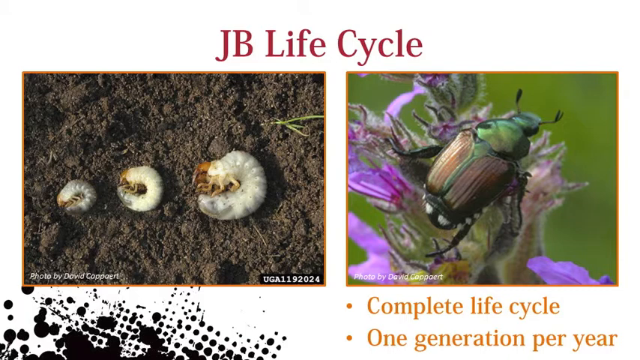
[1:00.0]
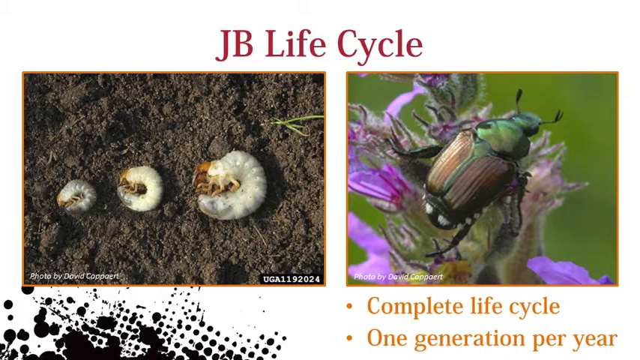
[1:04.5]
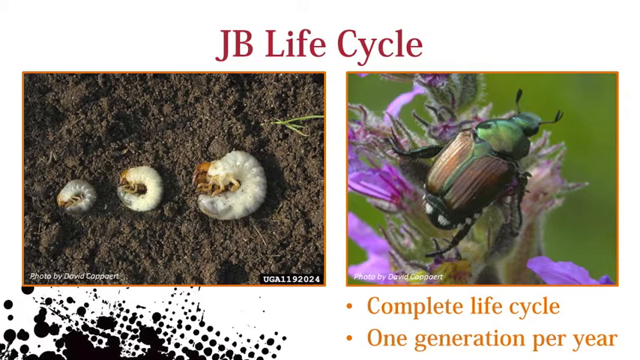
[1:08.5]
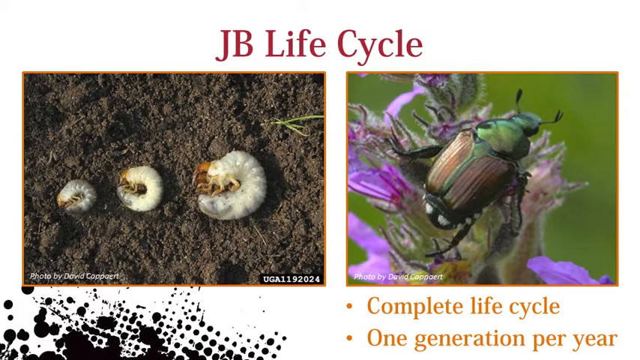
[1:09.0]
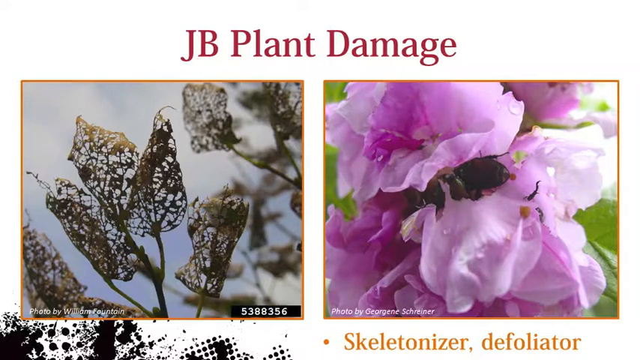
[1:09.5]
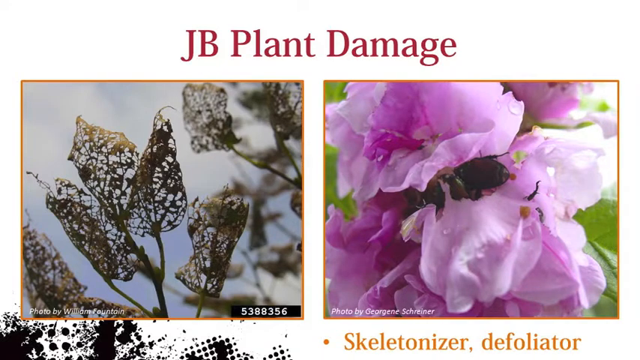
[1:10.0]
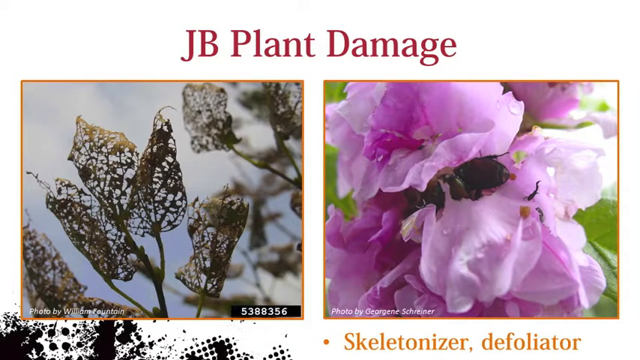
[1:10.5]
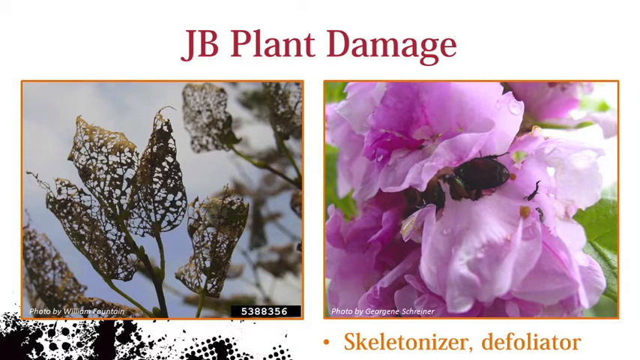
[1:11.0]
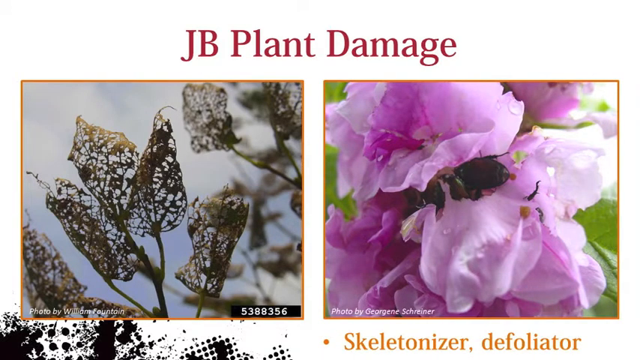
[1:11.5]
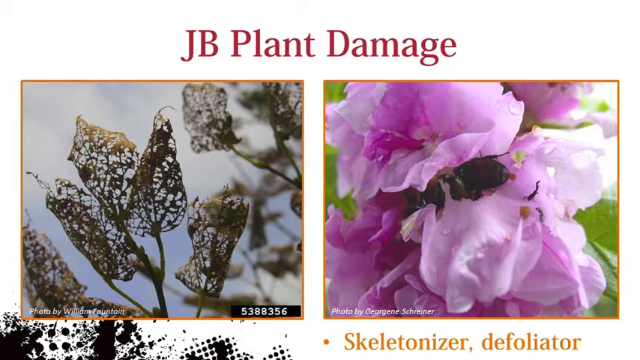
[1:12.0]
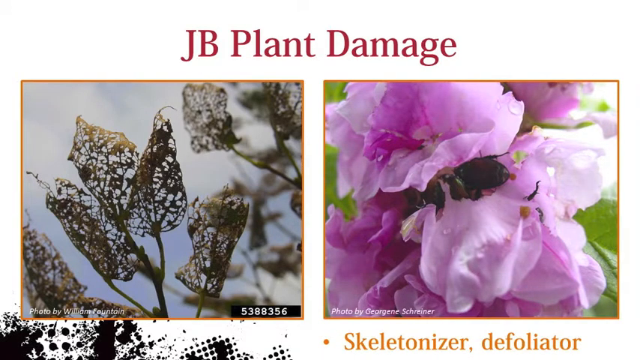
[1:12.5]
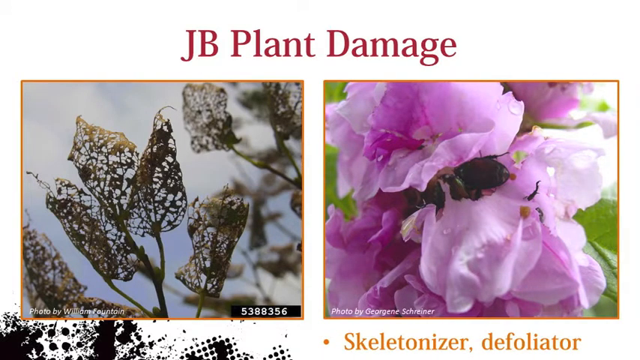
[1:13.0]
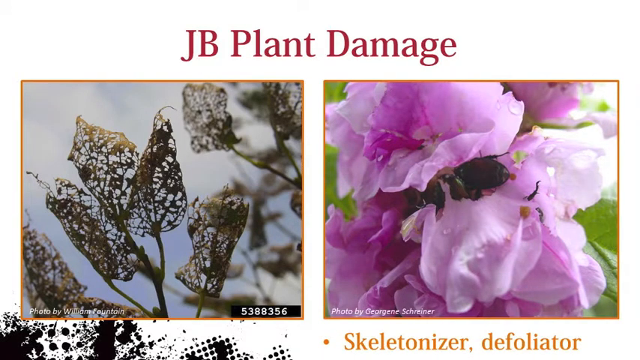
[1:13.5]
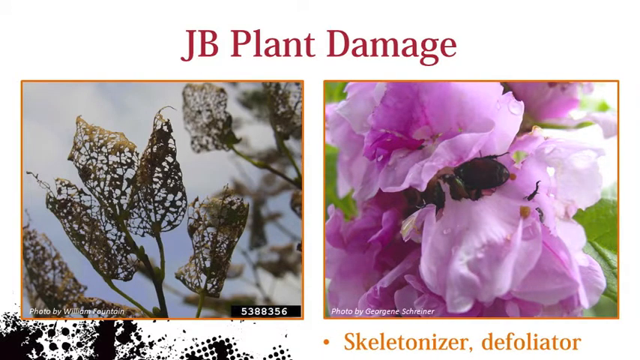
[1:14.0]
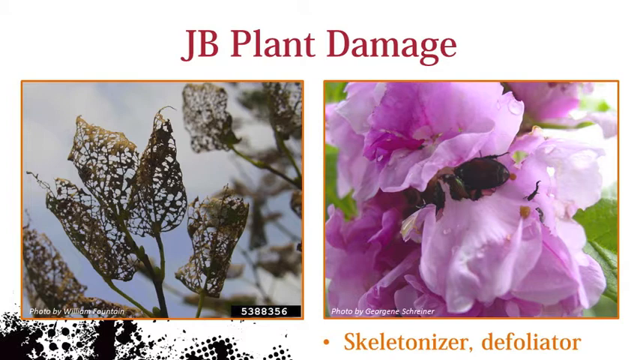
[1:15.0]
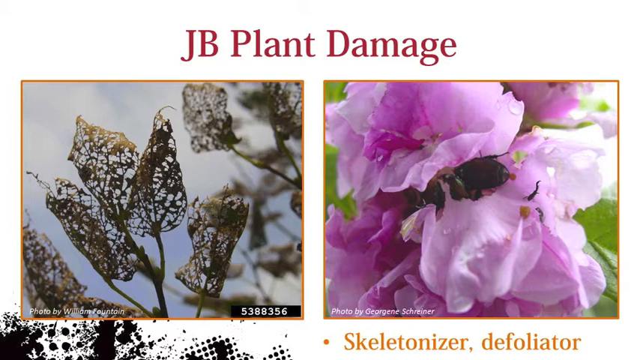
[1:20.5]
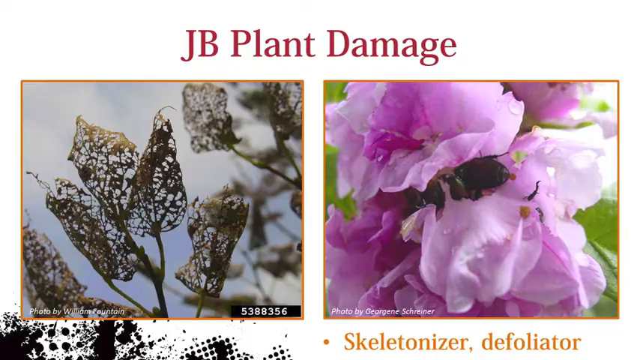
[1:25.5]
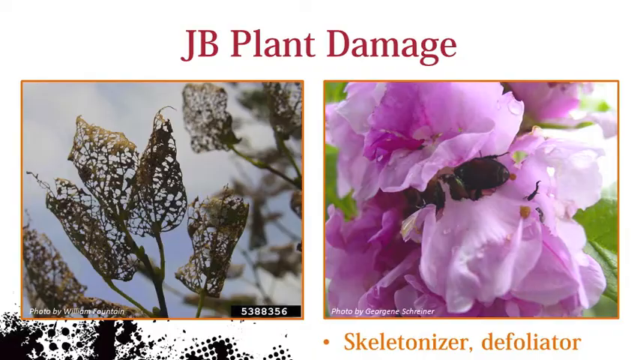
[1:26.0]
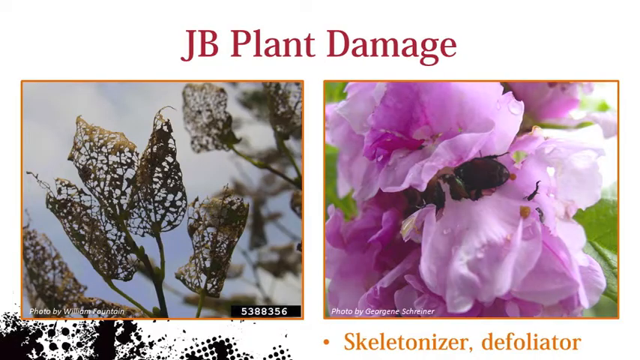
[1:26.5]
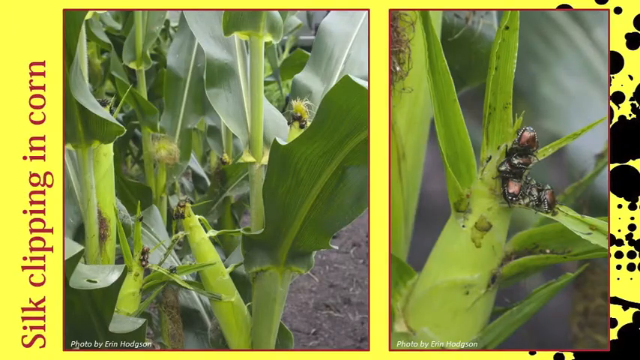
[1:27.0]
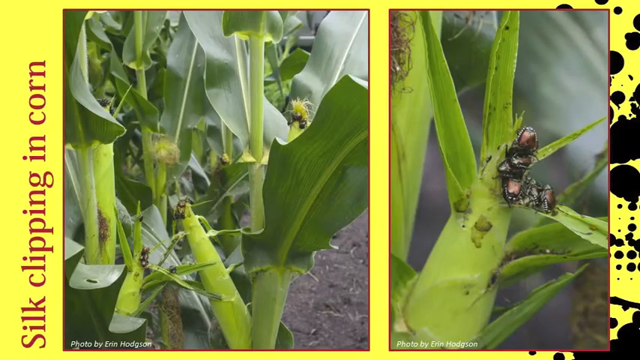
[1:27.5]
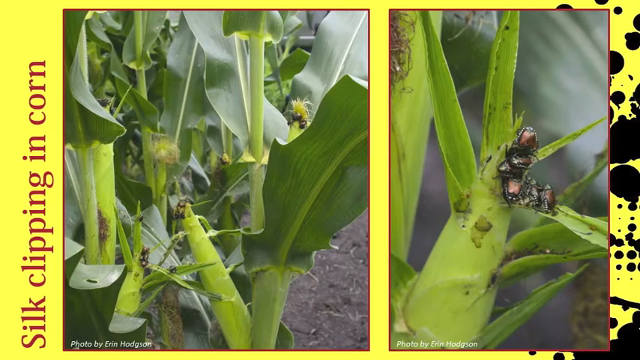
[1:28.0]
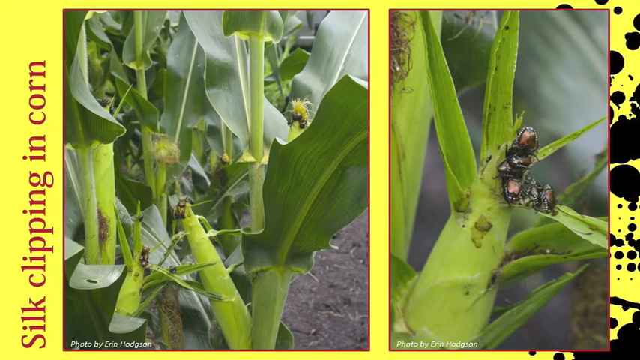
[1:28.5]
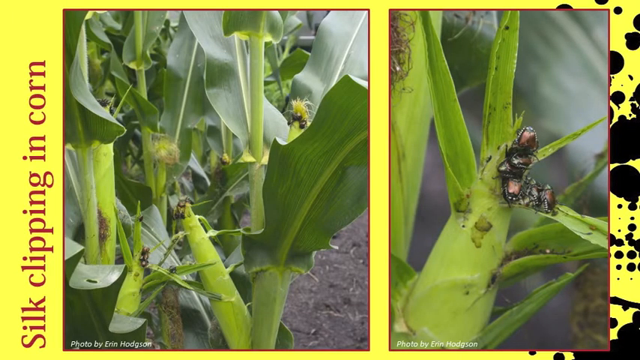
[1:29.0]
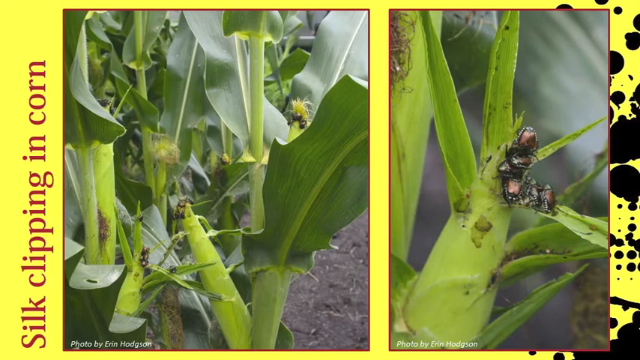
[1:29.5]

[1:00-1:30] The "JB Life Cycle" page shows two images below its title. The left one shows the growth of the beetle: a small see-through beetle growing into a bigger one and then into an adult-sized one, lying on their sides on top of soil at the bottom. At the bottom right are the words "complete lifecycle" and "one generation per year," and black painted spots appear at the bottom left. The image then changes to a page titled "JB plant damage" showing the damage the beetles cause in two images: dead leaves on the left, and a beetle lying on pink leaves on the right. At the bottom right of the page is the word "skeletonizer." The video then cuts to another page with a few more images.